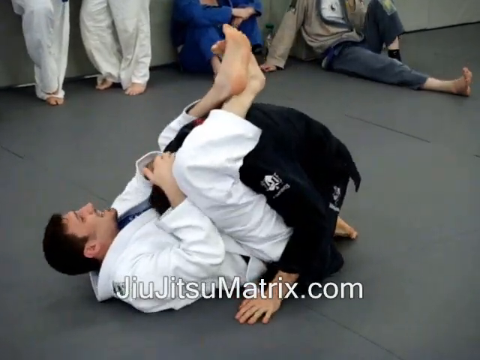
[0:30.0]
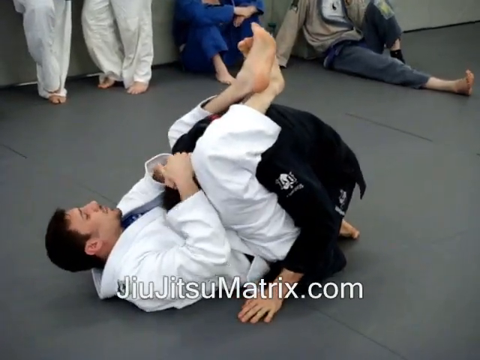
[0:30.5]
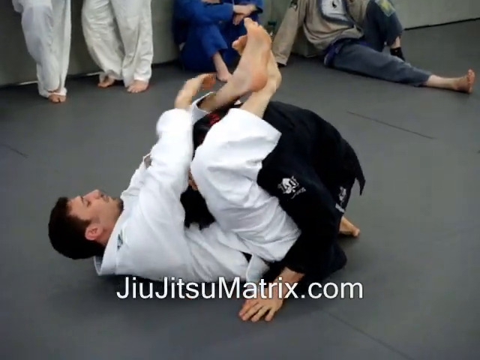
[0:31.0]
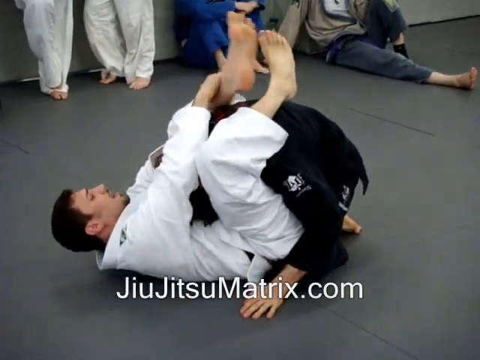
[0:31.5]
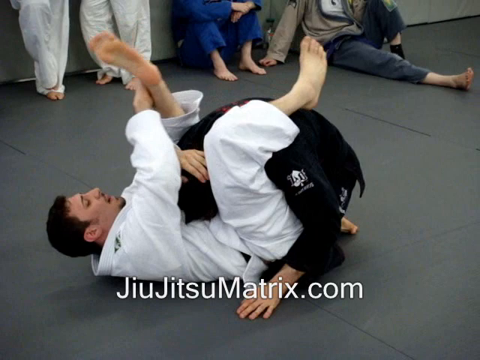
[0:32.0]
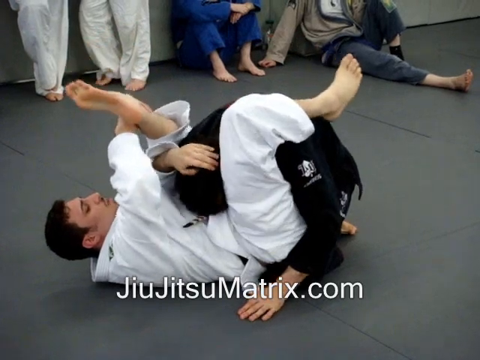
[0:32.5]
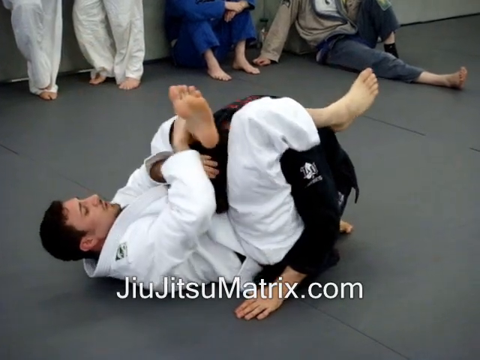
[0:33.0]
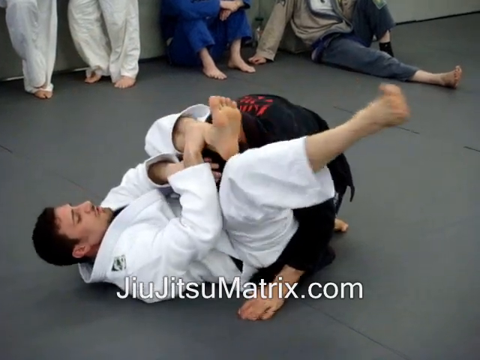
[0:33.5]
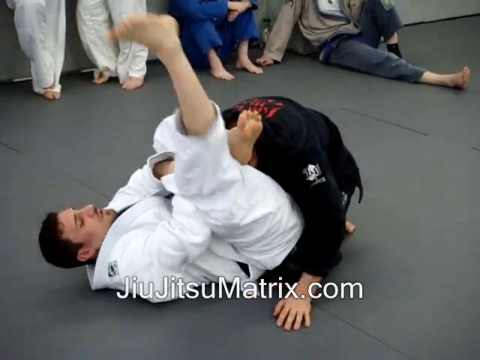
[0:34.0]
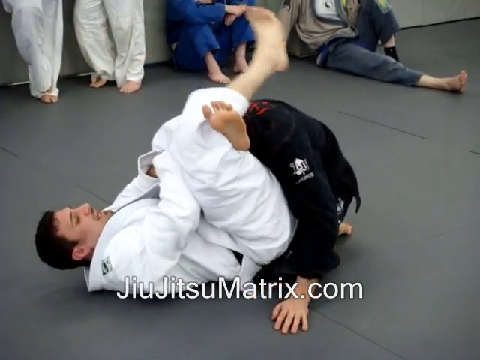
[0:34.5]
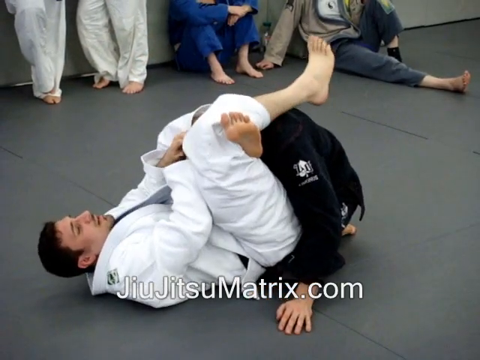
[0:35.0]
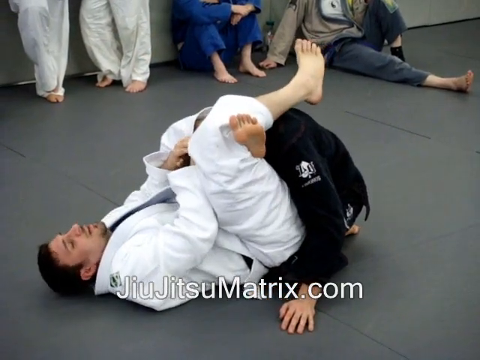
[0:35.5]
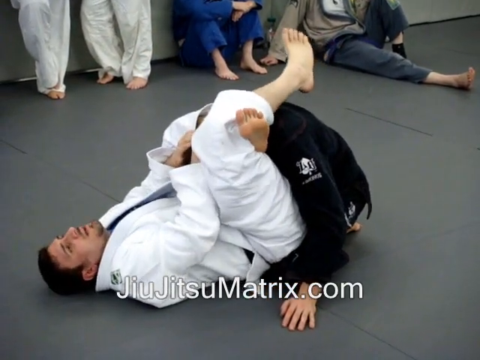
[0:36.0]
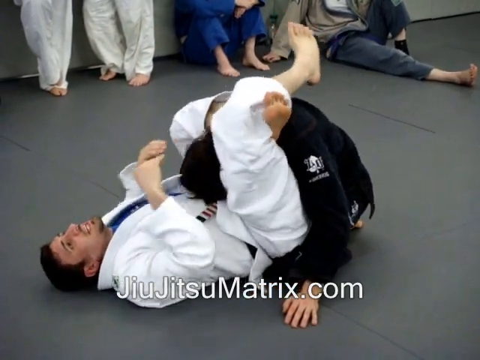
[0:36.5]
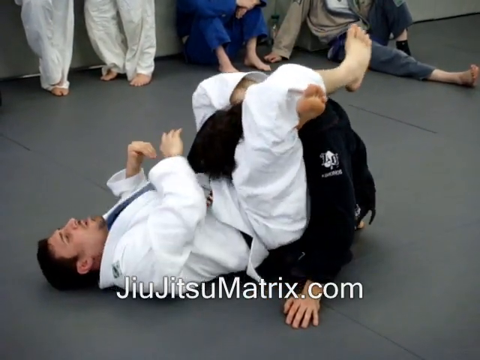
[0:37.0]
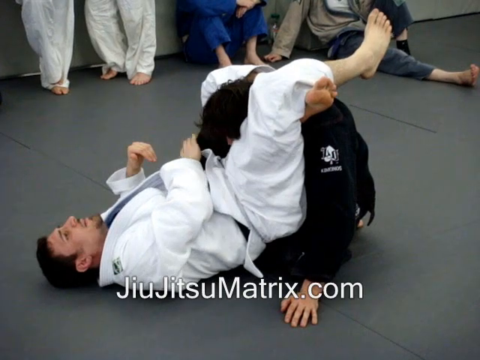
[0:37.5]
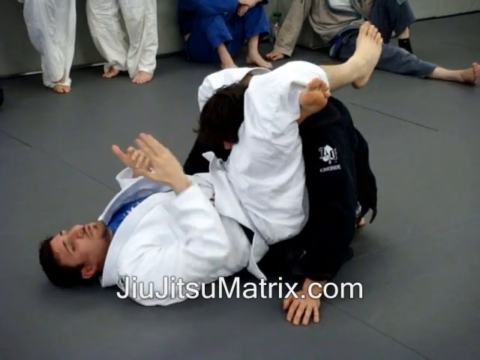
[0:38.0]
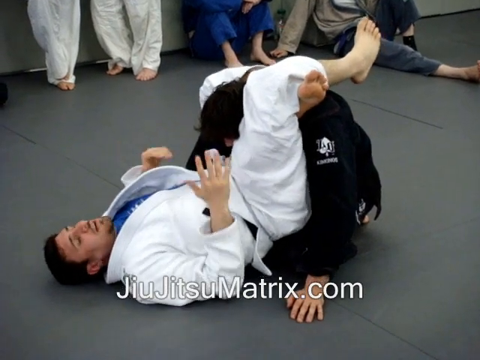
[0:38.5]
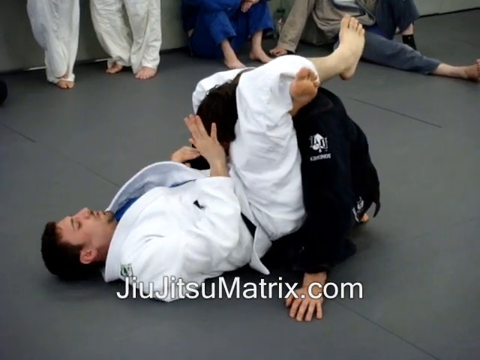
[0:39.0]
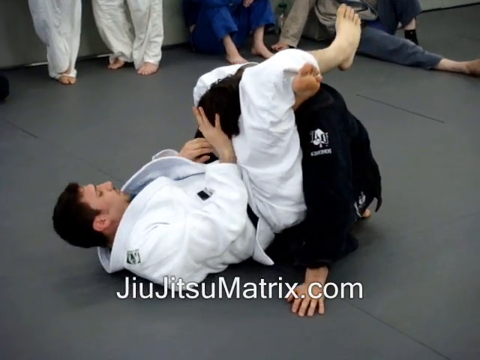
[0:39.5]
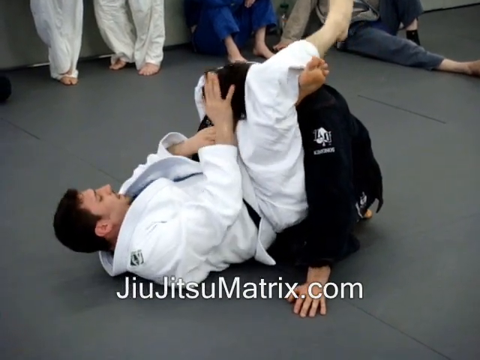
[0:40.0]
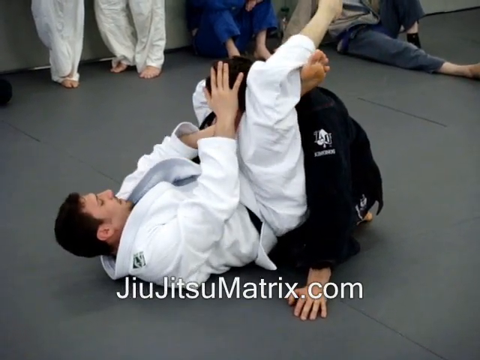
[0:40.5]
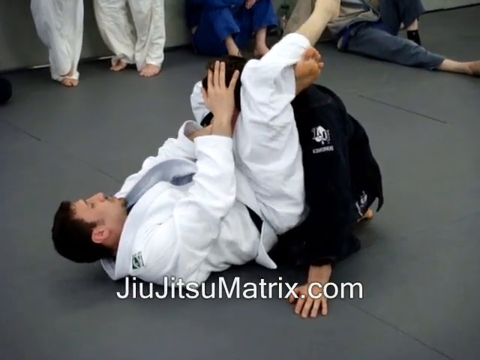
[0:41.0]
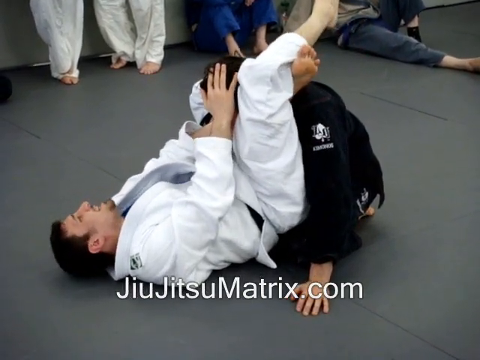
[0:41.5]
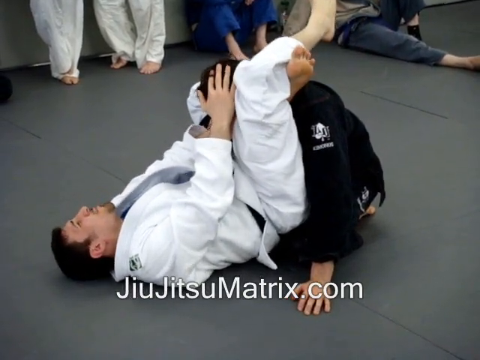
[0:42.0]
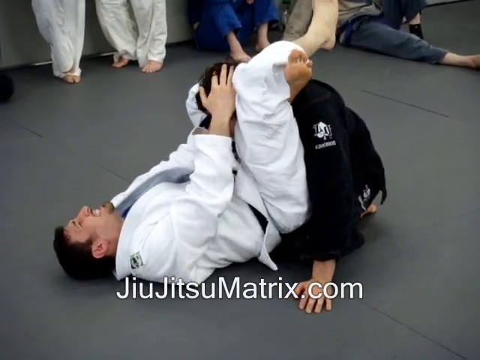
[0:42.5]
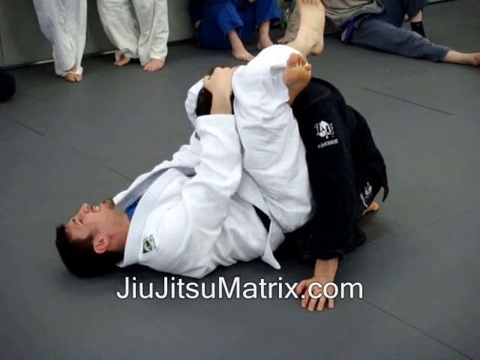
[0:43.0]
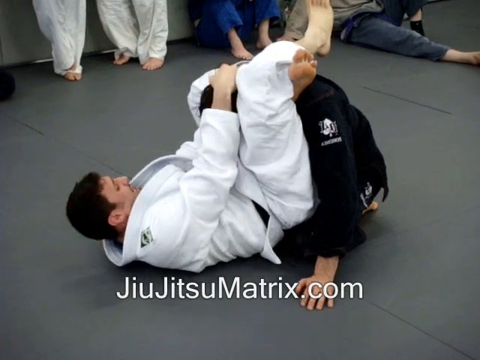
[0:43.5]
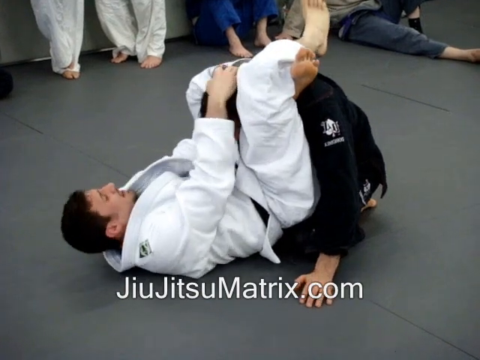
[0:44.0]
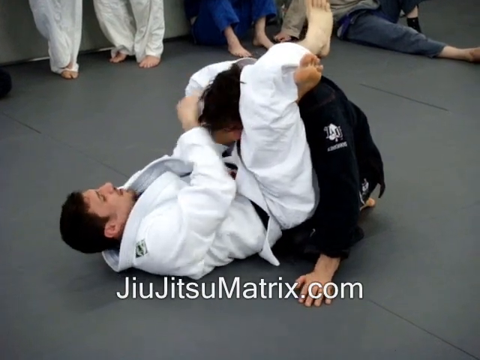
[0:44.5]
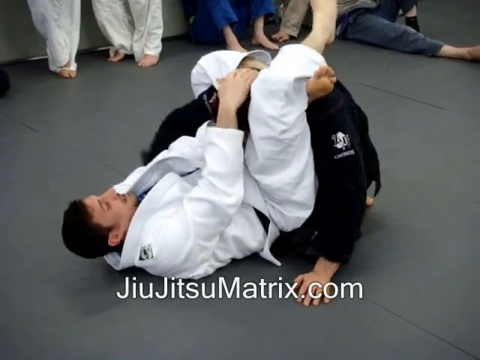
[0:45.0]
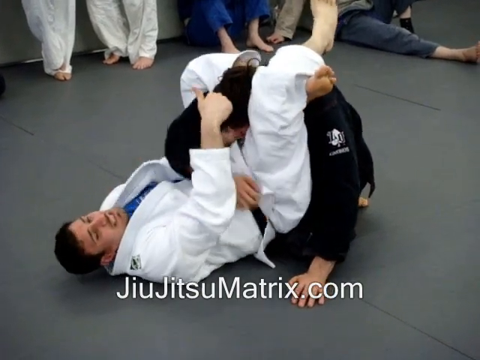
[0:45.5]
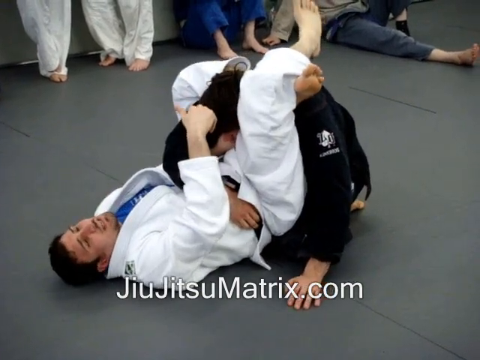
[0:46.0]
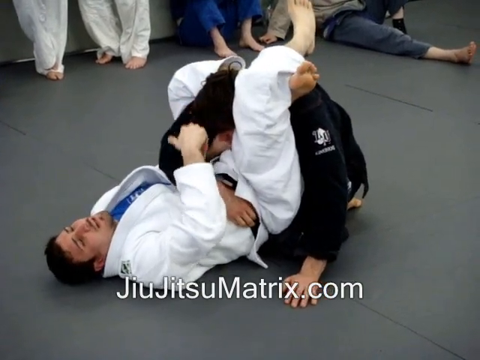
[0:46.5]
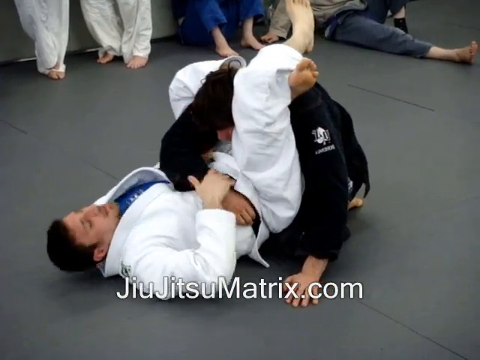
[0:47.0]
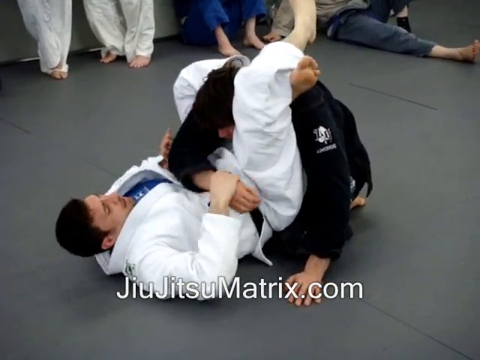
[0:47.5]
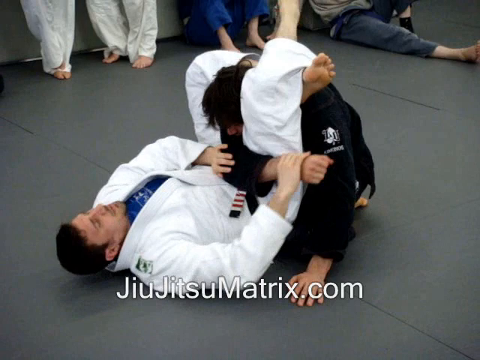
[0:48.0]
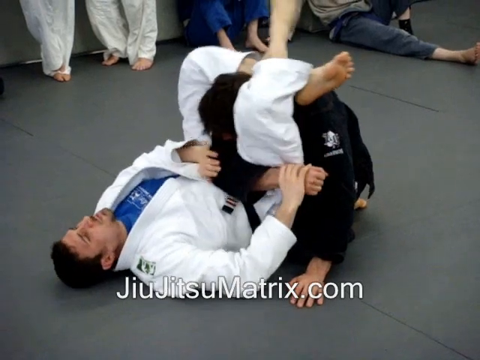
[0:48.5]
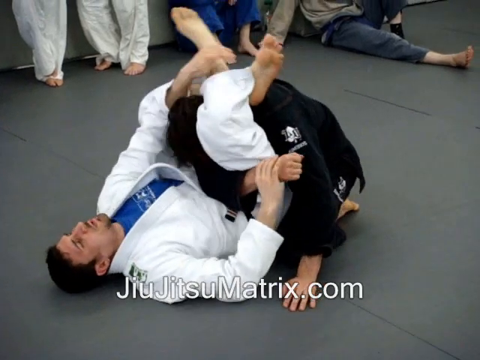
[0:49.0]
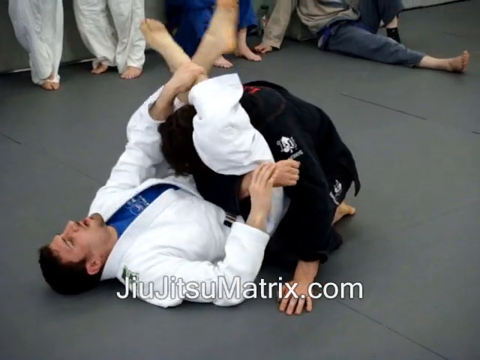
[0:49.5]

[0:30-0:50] The instructor pulls the student's head down into his chest/groin area. He pulls his leg up, over and around onto the student's head, sort of in a criss-cross position, then guides his right leg up and over his left ankle, locking it under his knee while still holding the student's head; the legs are now around the student's neck. The student is in a sort of frog-sit position. The student brings his right arm over the teacher's stomach. The teacher grabs the arm in an L-shape, holding it at the wrist and elbow, and pushes it against his leg to lock him in position. He then changes the position of his legs. The original men are still in the background, watching the demonstration. Text at the bottom reads "jiu-jitsumatrix.com."